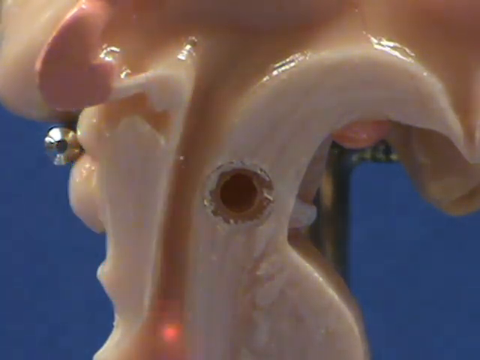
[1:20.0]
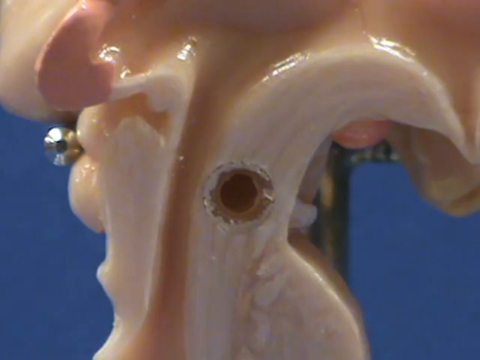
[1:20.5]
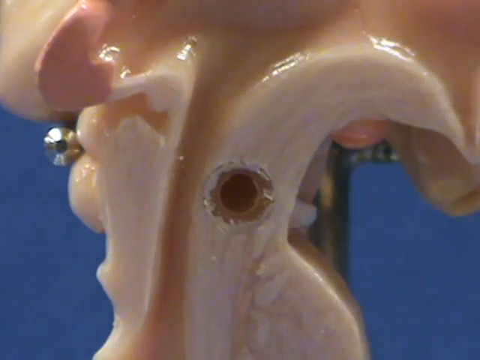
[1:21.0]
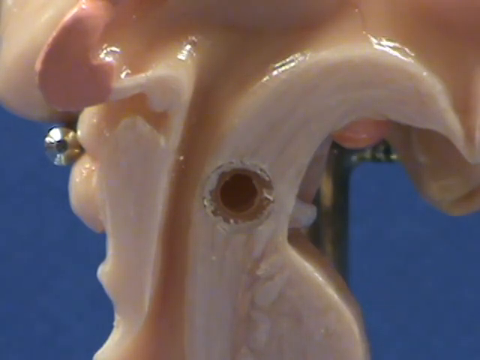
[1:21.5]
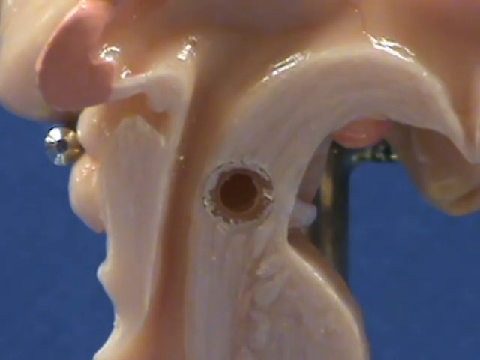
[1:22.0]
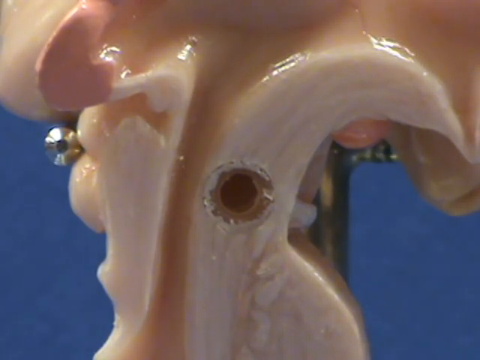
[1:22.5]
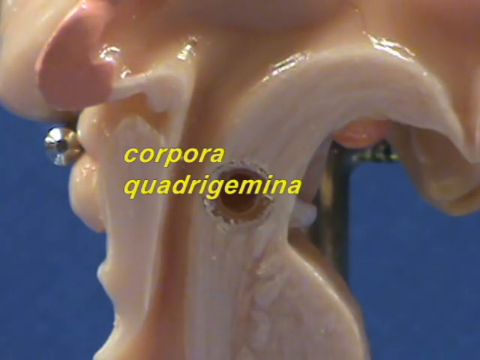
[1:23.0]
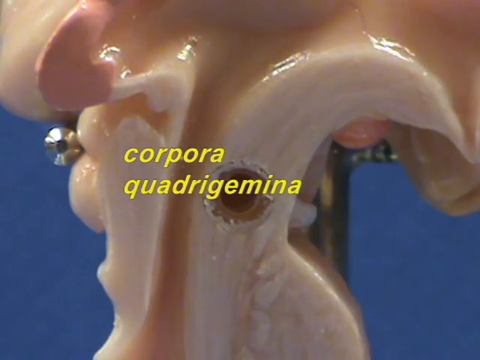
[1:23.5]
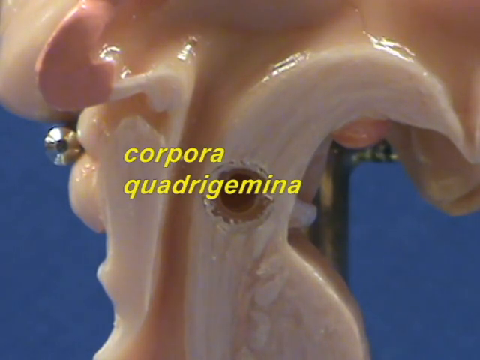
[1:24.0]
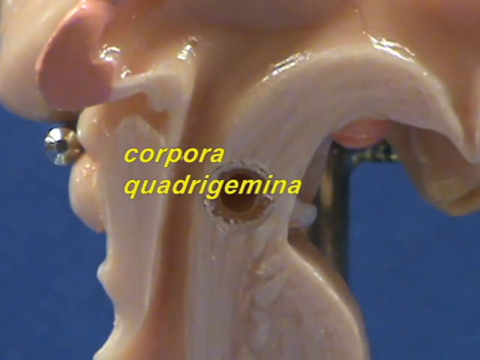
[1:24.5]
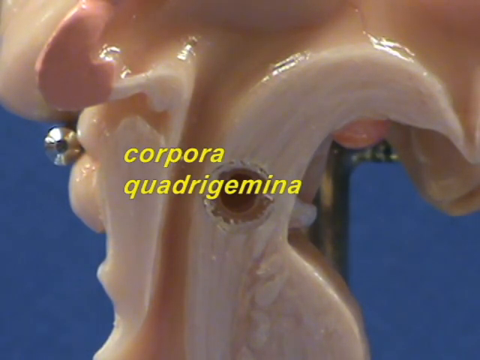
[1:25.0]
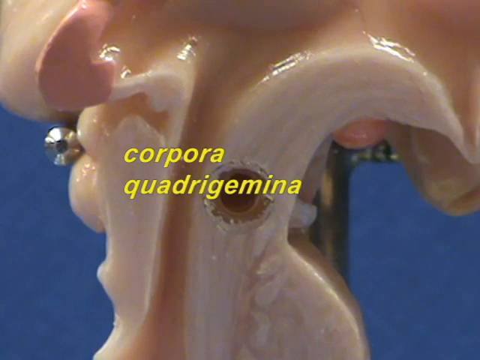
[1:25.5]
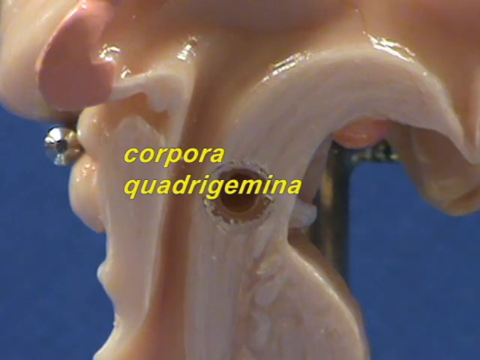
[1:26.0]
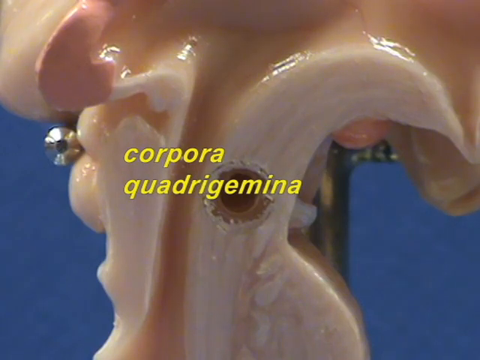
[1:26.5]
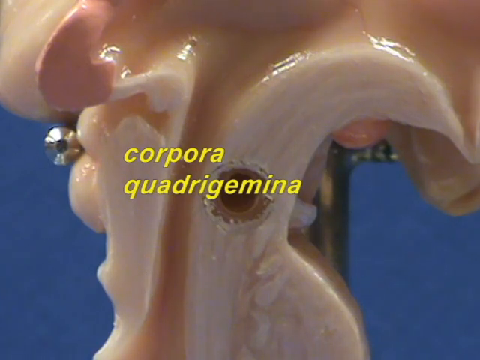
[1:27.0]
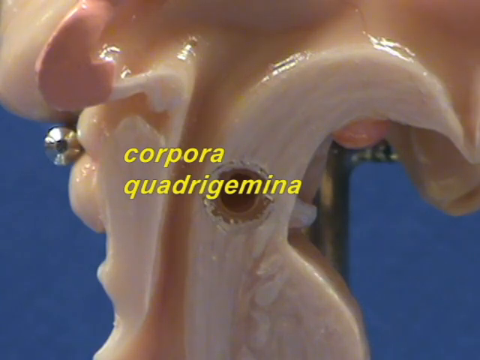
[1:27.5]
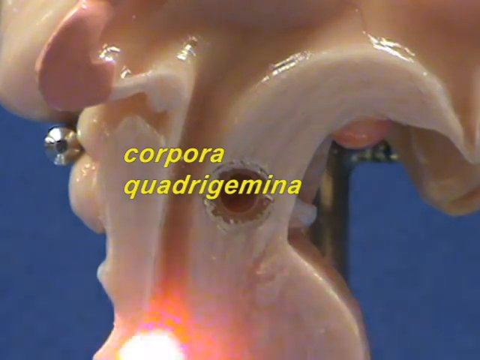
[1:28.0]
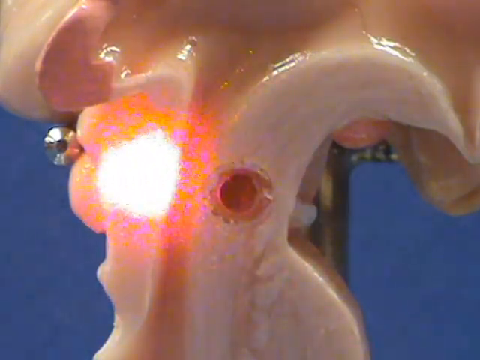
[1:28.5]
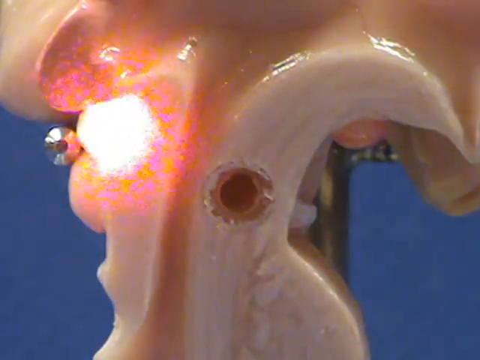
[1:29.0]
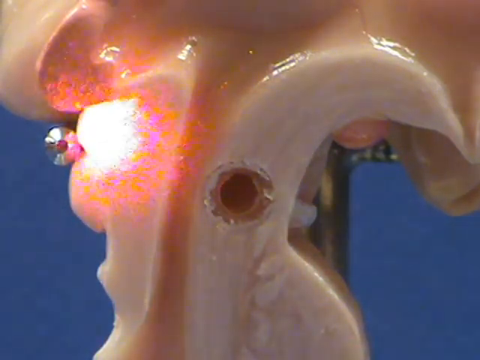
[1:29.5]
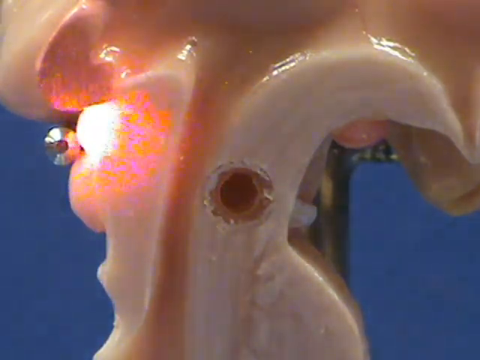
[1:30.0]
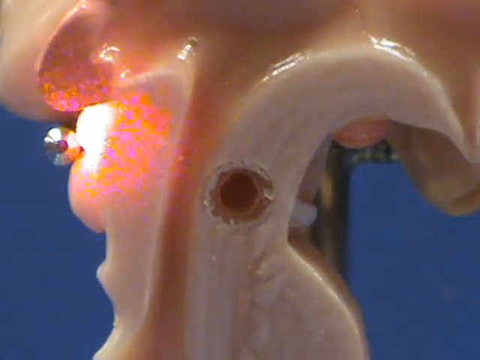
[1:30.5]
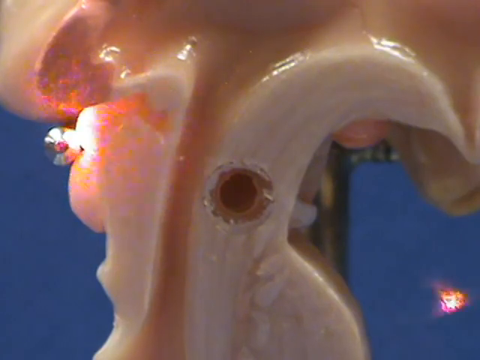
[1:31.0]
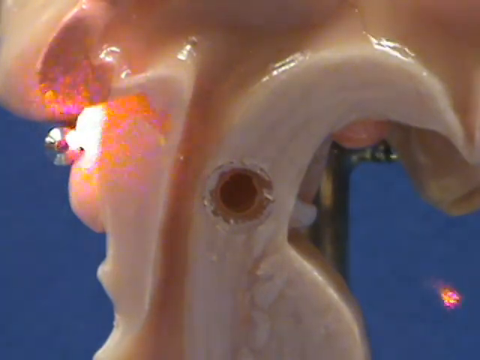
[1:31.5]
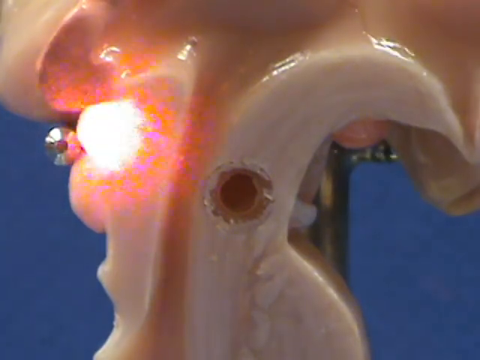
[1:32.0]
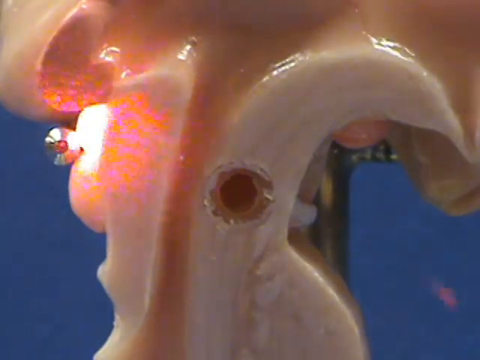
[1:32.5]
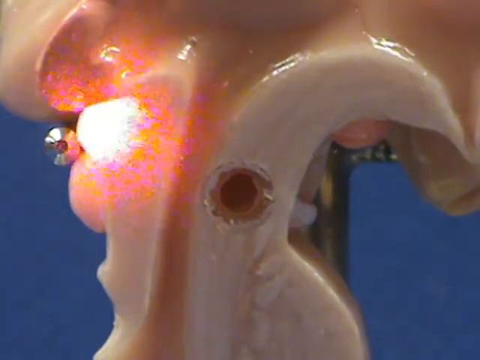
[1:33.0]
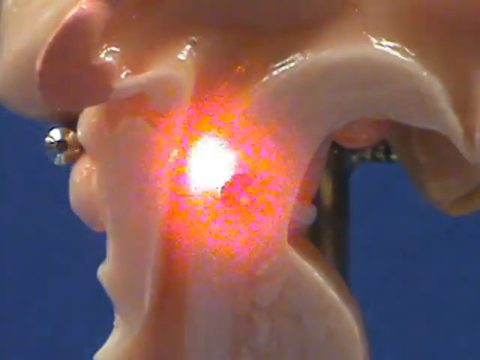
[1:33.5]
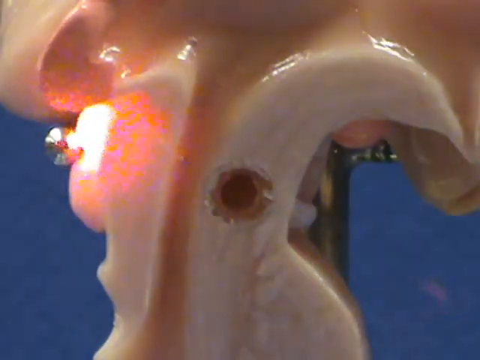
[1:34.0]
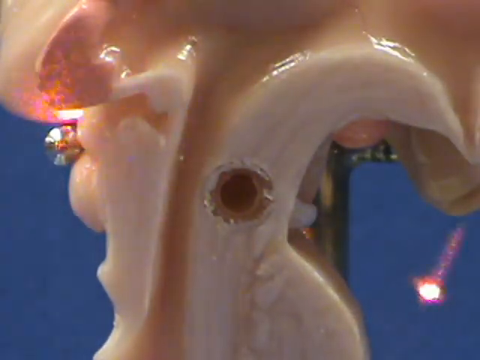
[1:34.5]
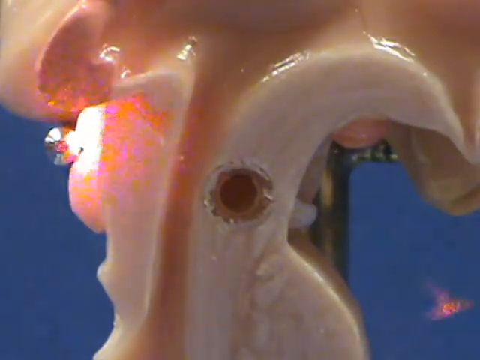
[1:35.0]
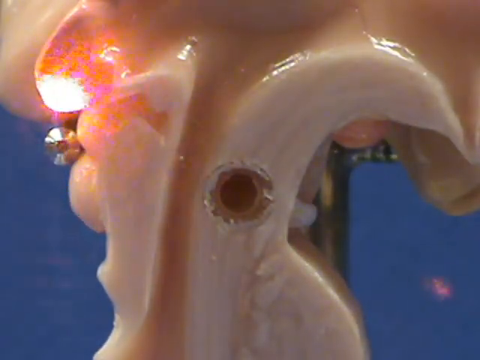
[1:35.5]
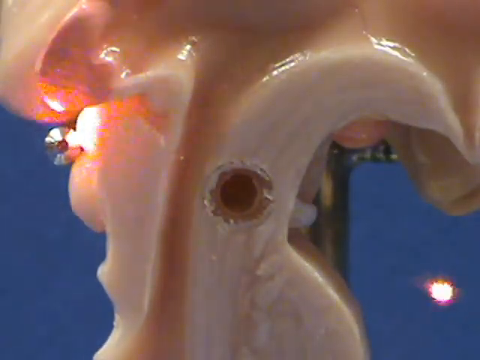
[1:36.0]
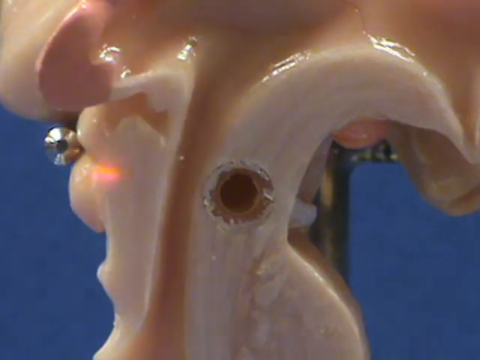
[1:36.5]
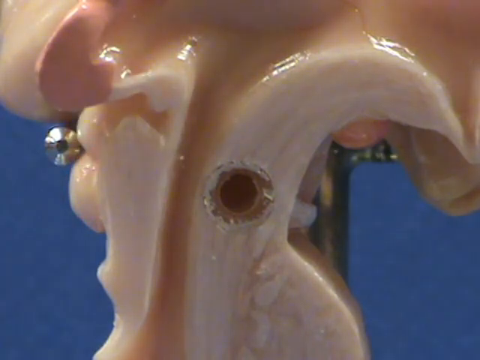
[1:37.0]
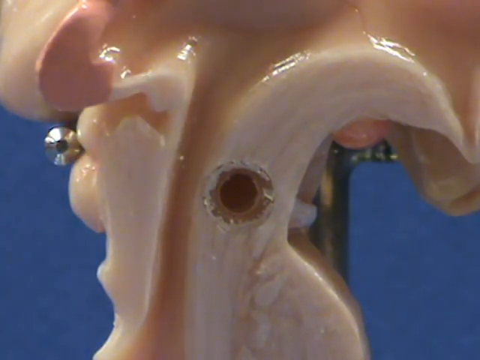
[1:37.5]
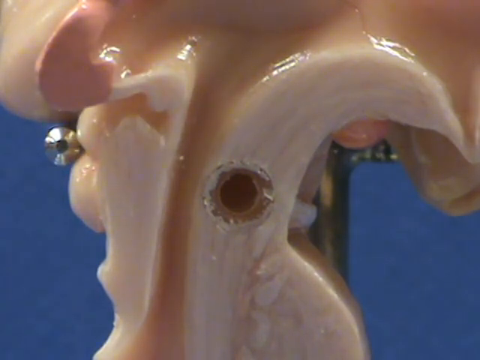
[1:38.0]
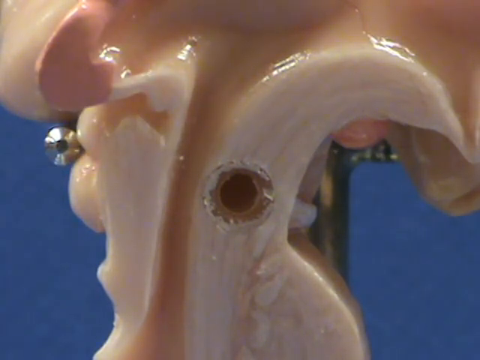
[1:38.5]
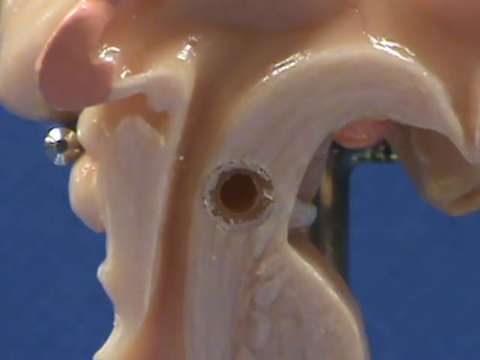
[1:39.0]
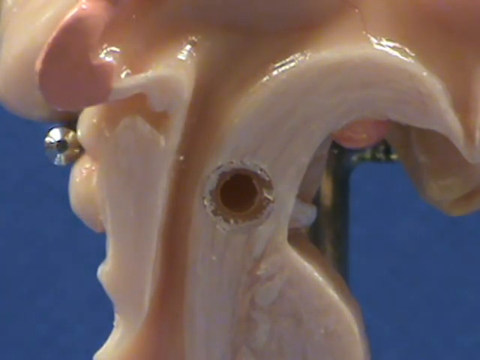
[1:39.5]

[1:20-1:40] The view stays zoomed in on the piece of the human body, which looks like a teaching model. Metal parts are visible in the background, seemingly fastened to it to hold it up. Yellow text pops up reading "corpora" and then "quadrigemina" appears right in the middle. The small flashlight is not on the screen; when the yellow text goes away, the flashlight appears. It seems to move up toward the top part. Another yellow label then pops up reading "corpora quadrigemina". Then "superior colliculi" pops up and goes away quickly.